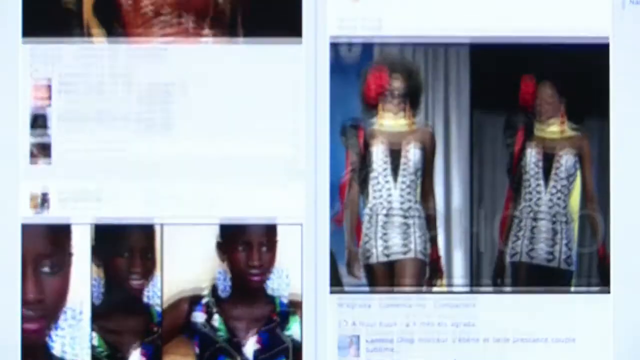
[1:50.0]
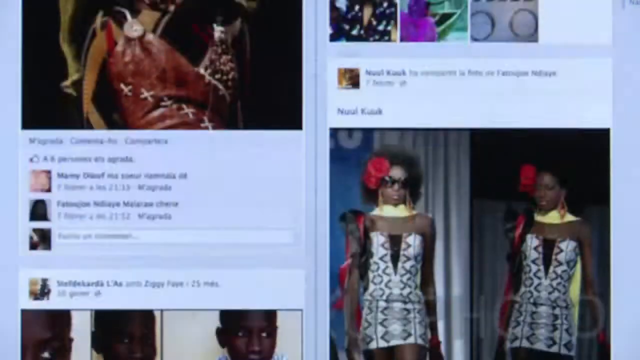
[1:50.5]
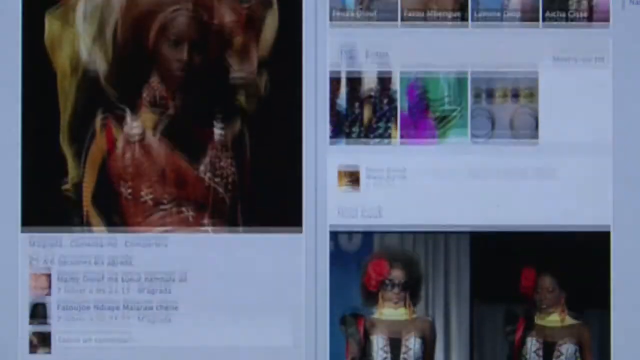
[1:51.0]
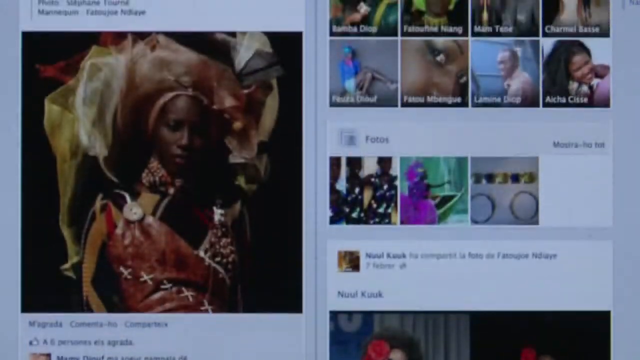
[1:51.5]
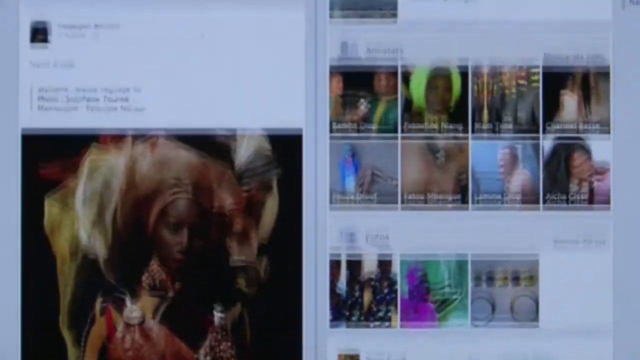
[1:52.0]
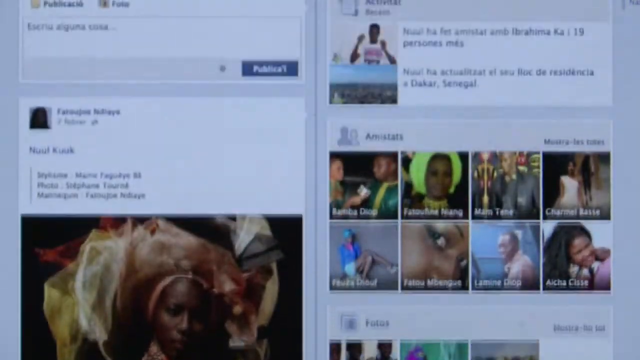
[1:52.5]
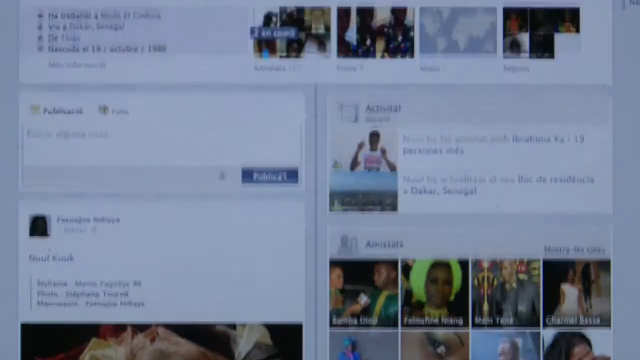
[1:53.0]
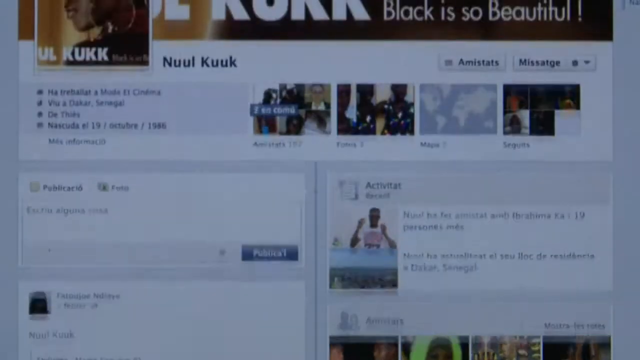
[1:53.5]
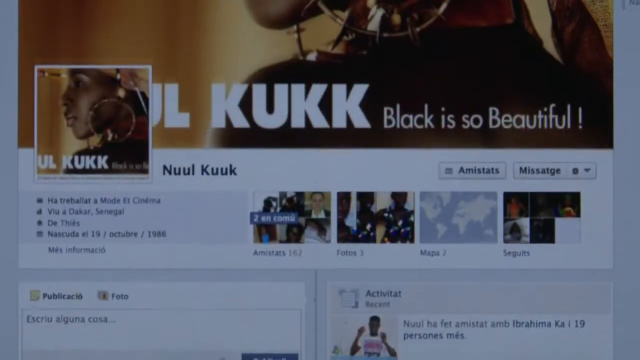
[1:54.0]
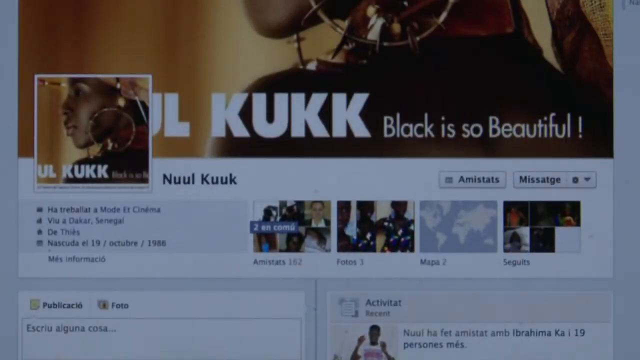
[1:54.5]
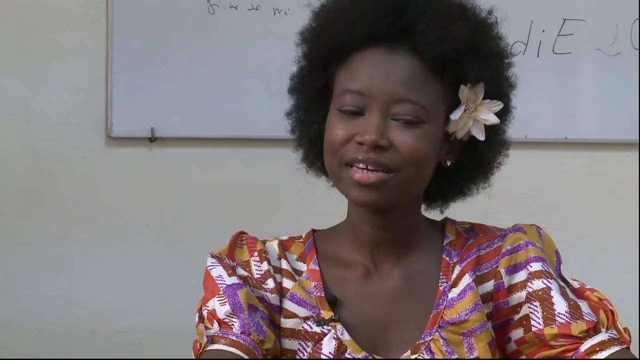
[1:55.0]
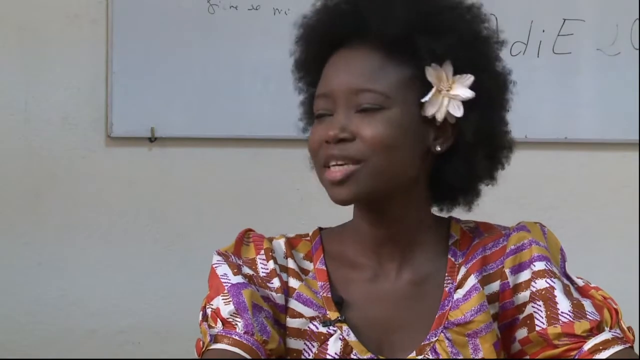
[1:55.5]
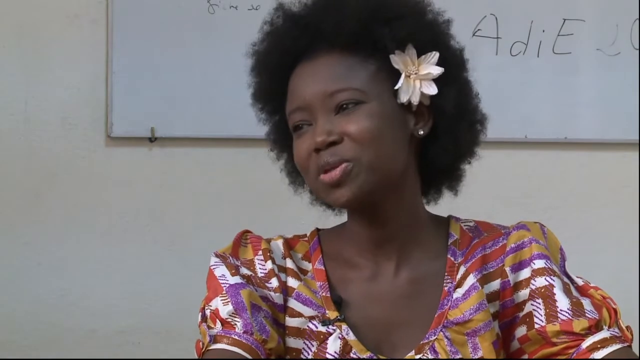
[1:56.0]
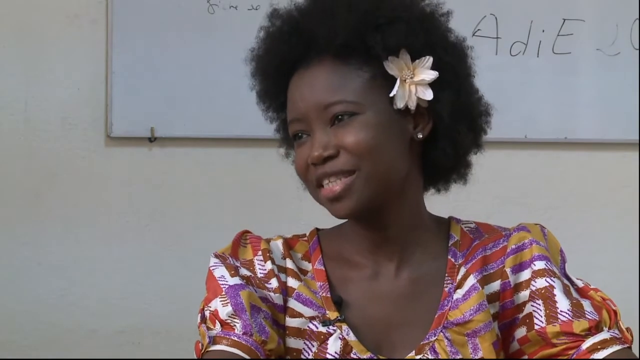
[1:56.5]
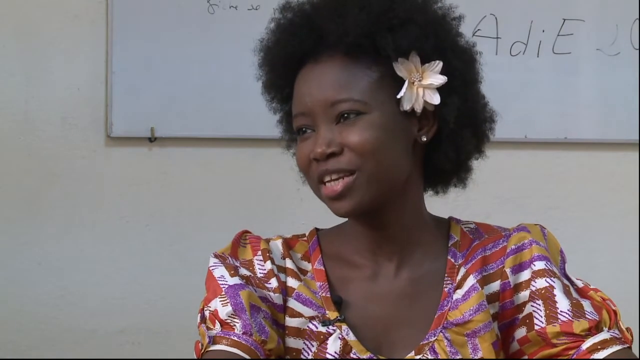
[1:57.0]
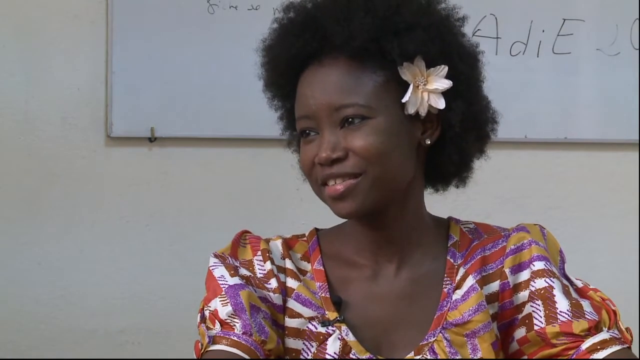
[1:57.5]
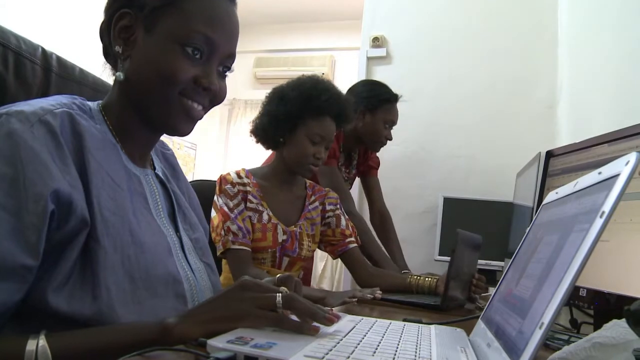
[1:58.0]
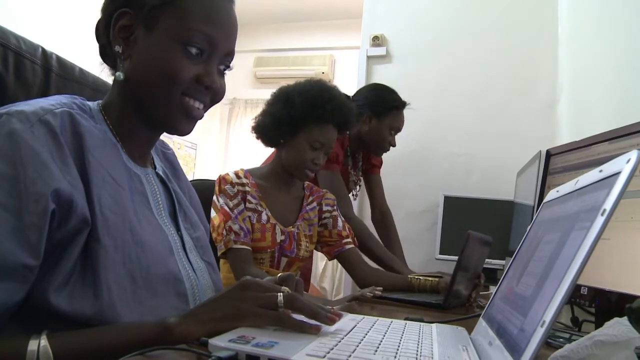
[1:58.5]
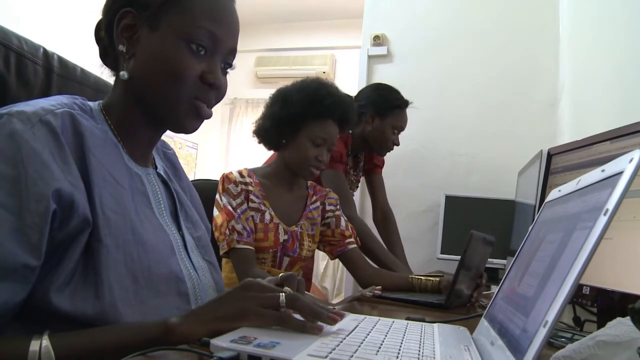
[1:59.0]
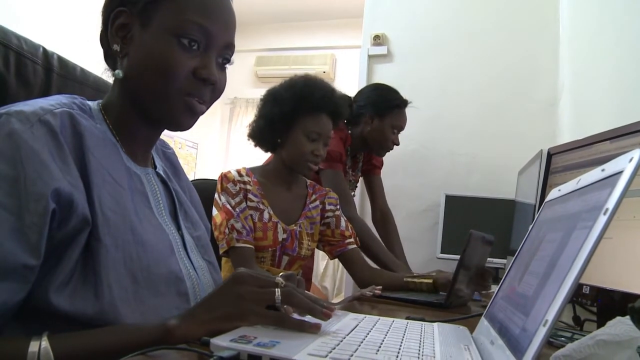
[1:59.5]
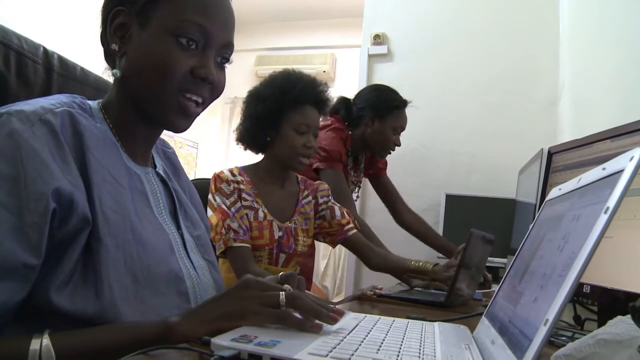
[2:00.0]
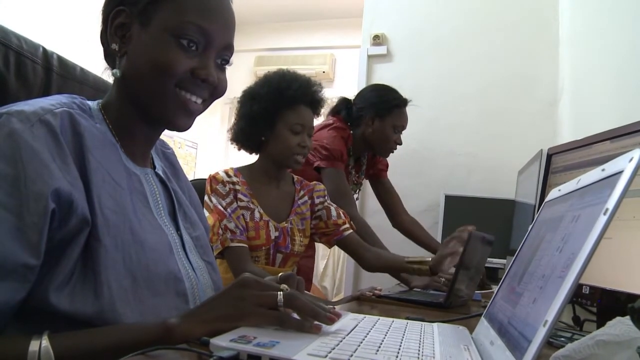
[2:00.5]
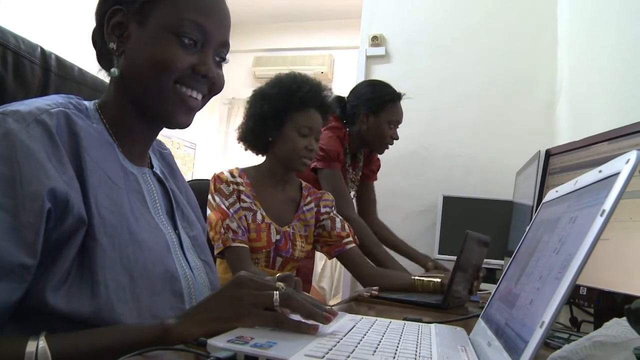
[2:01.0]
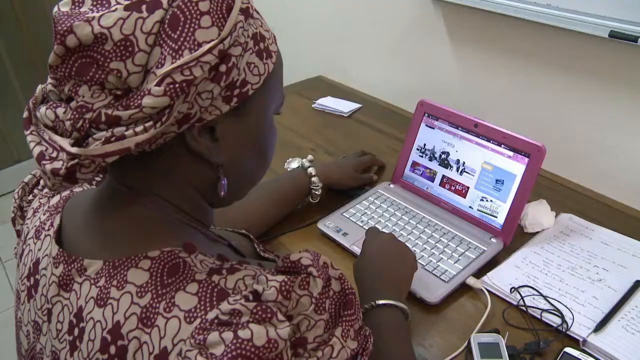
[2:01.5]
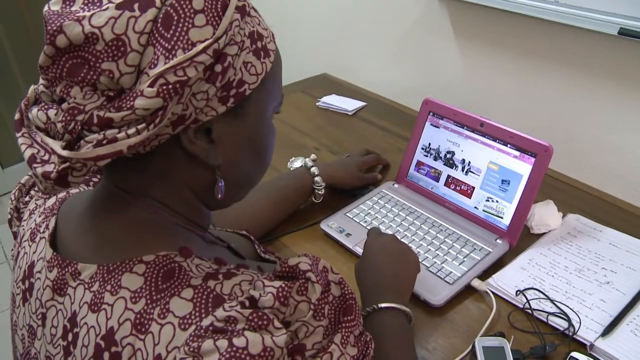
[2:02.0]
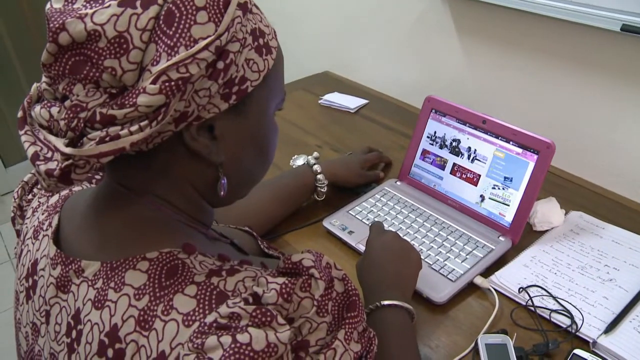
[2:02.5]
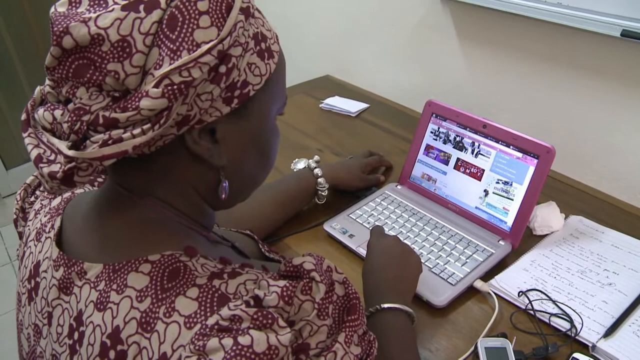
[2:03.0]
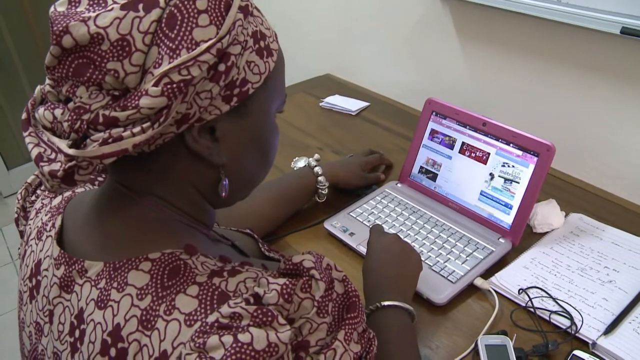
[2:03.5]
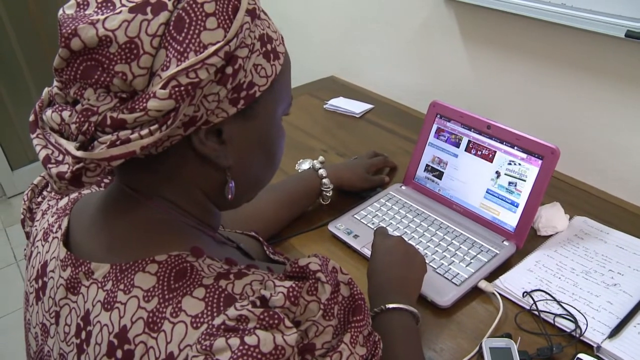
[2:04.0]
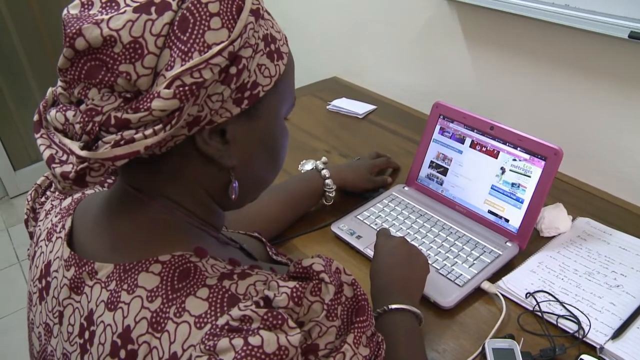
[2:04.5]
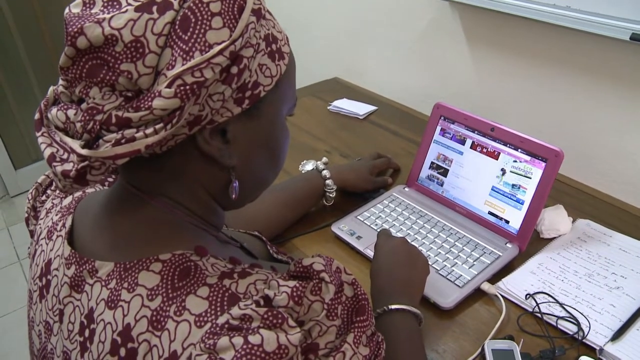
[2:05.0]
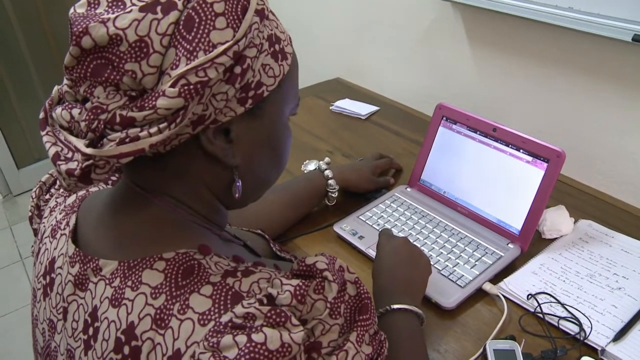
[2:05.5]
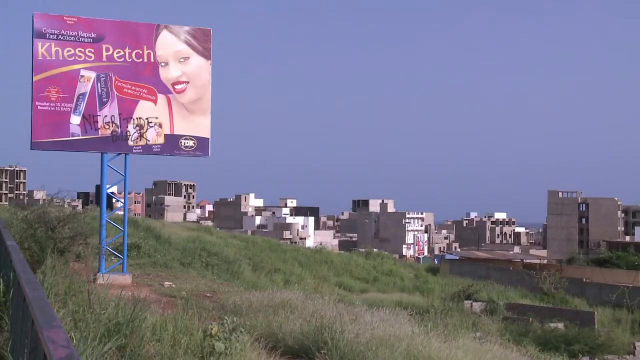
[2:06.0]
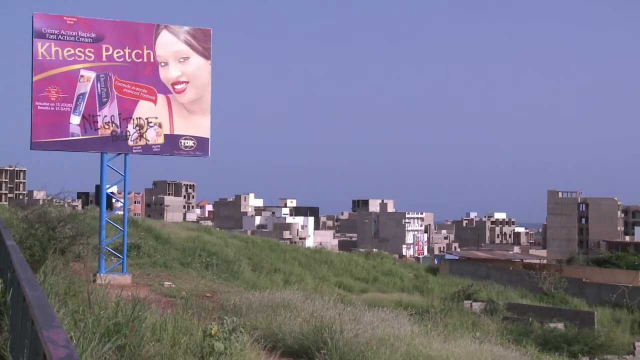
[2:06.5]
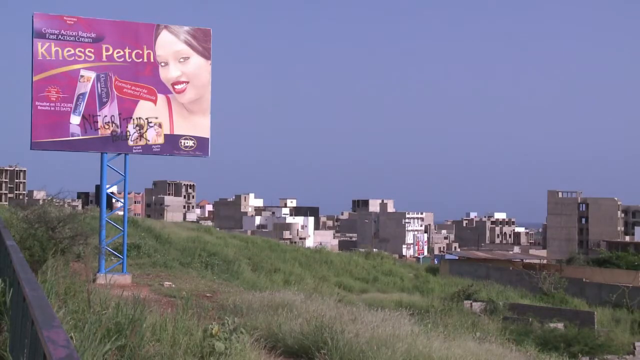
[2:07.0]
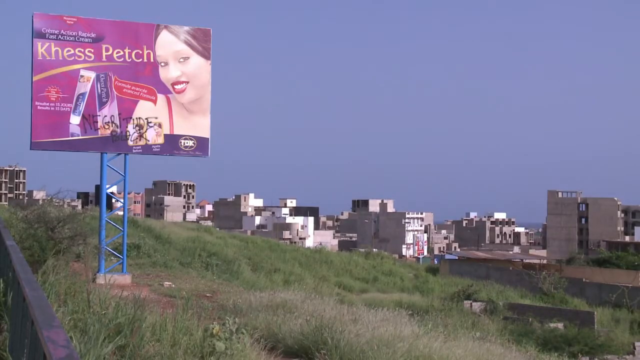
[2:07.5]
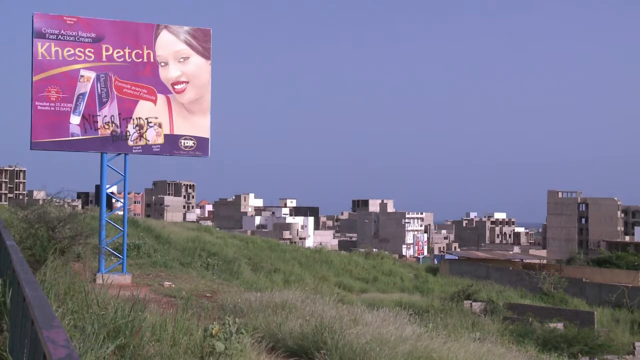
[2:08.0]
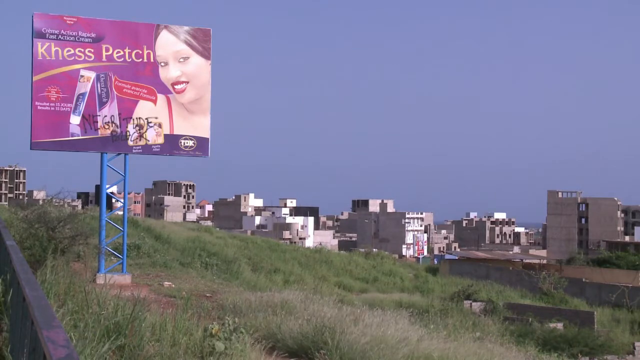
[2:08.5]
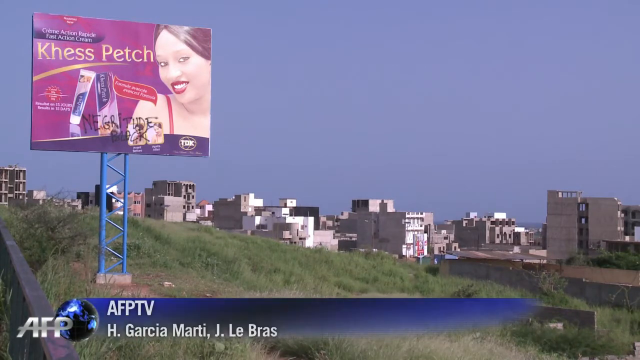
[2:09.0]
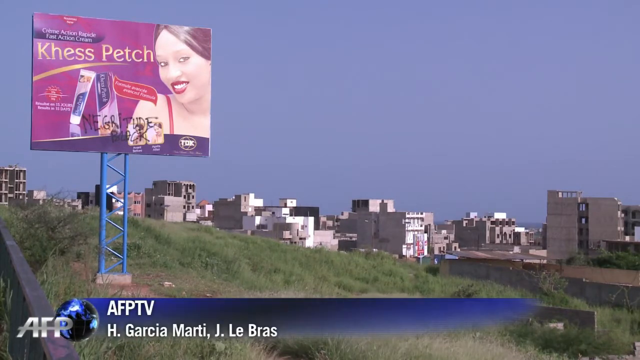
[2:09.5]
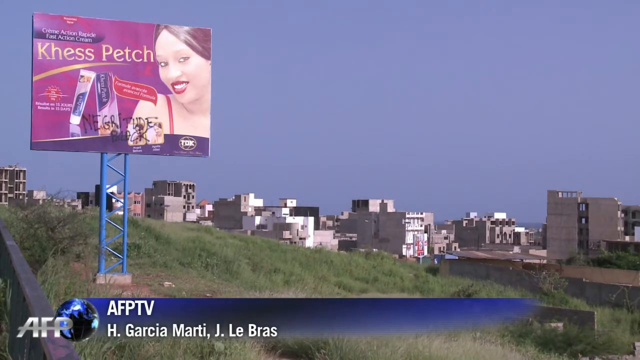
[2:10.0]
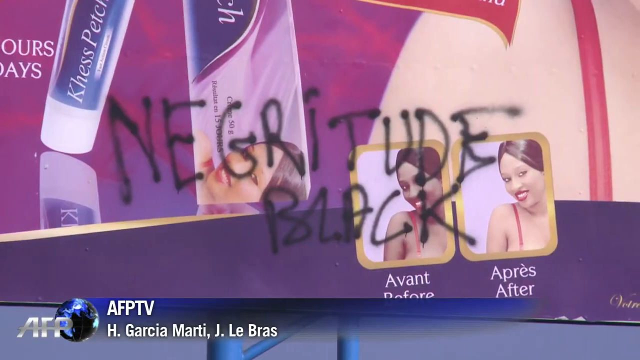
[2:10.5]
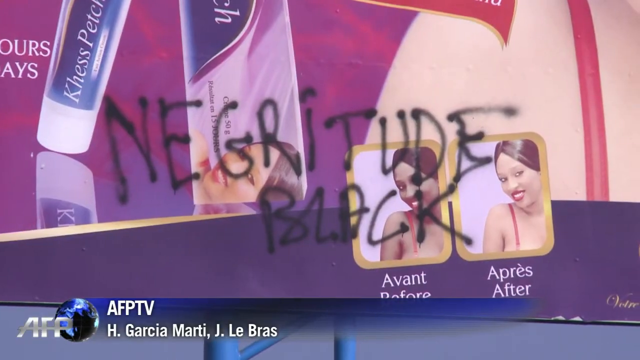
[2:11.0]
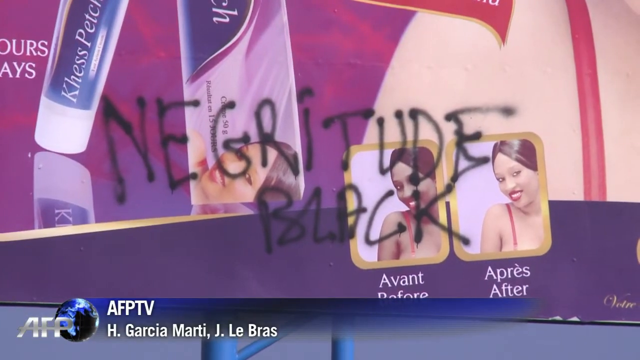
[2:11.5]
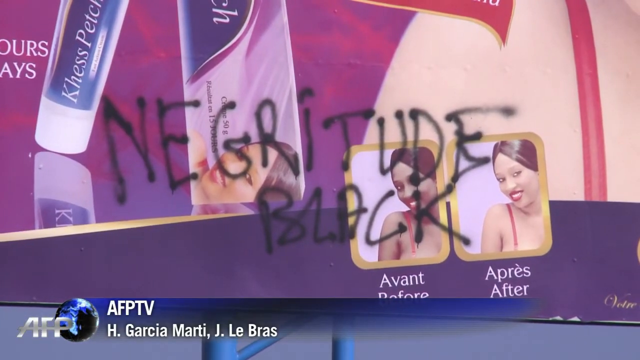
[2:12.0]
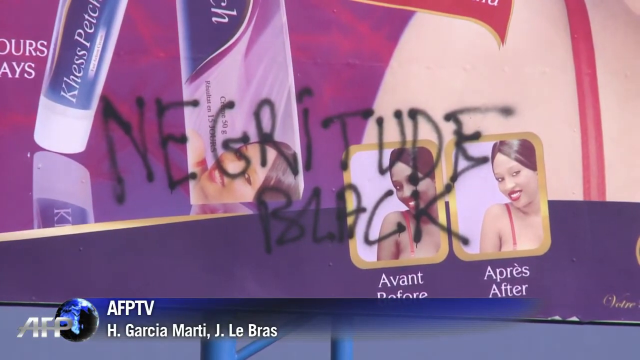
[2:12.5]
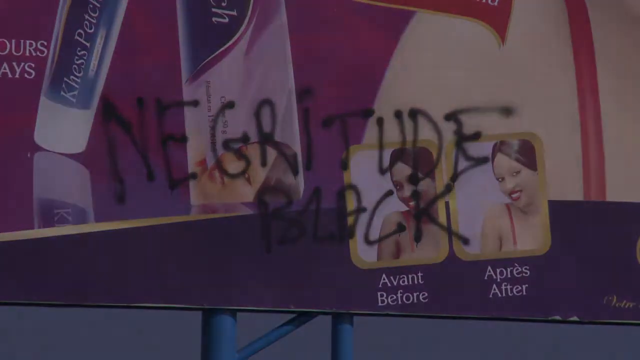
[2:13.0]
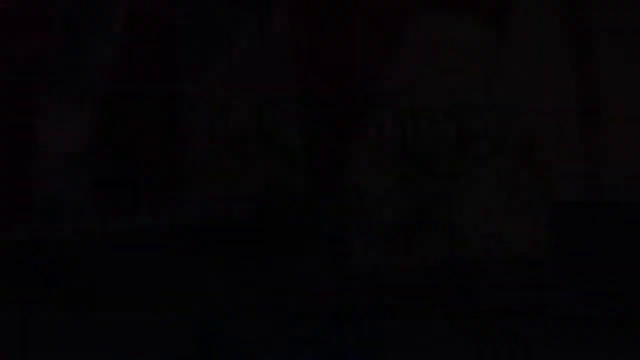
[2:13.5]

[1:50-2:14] A website called Luke Luke shows very well-dressed Black women. A very well-dressed Black woman with a flower in her hair, a blogger, speaks while on a computer, with two other women next to her. A very well-dressed woman in a head wrap goes through pages on a small computer screen. An advertisement for the skin-whitening cream follows, showing a Black woman whose skin looks very white, with a before-and-after picture. Someone has written a word in graffiti in black letters over the bottom of the billboard, whose support looks kind of like a ladder. The billboard is positioned on a hill near a very large city. A close-up of the graffiti shows it reads "Negritude" and "black".